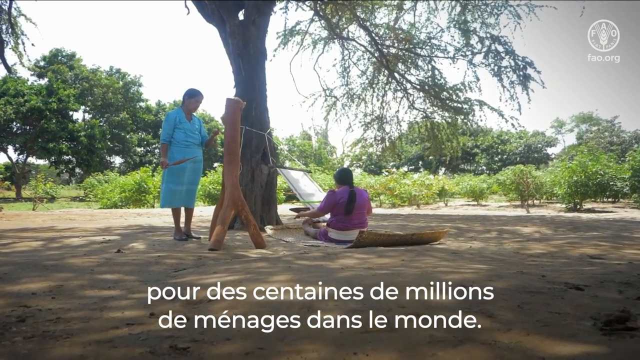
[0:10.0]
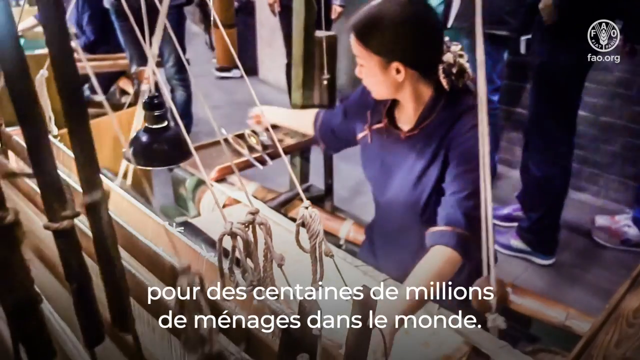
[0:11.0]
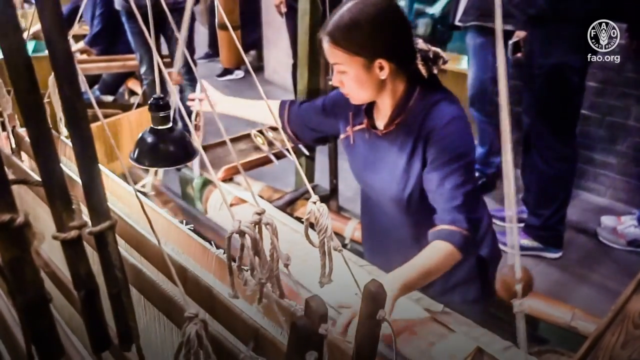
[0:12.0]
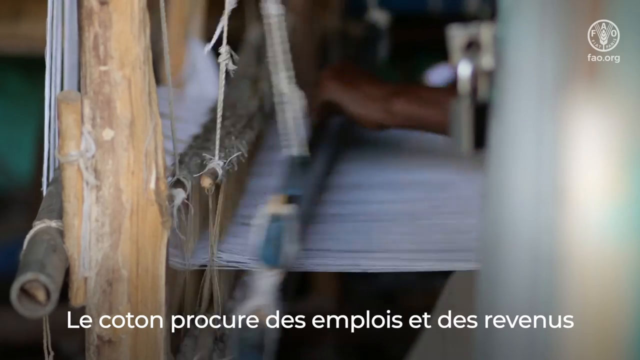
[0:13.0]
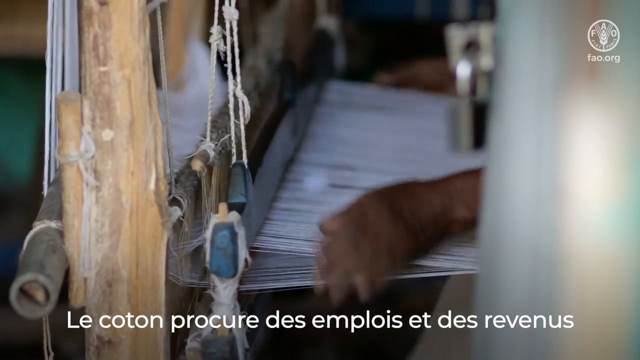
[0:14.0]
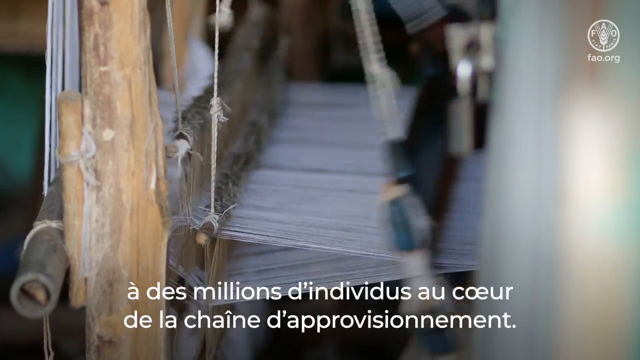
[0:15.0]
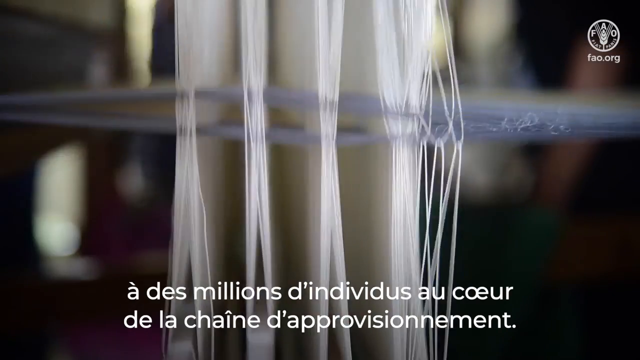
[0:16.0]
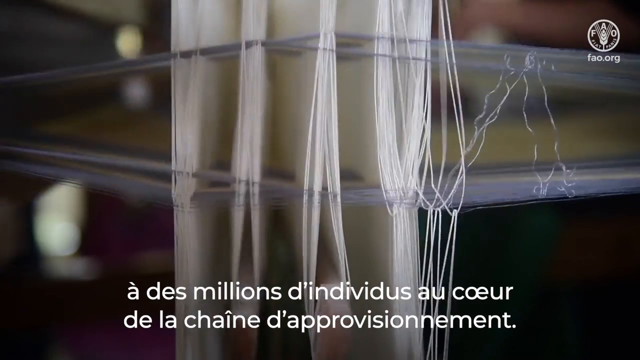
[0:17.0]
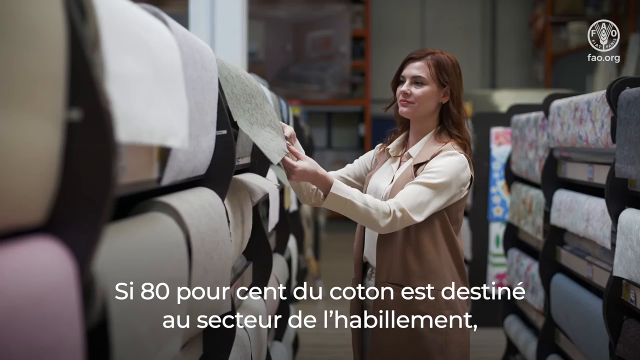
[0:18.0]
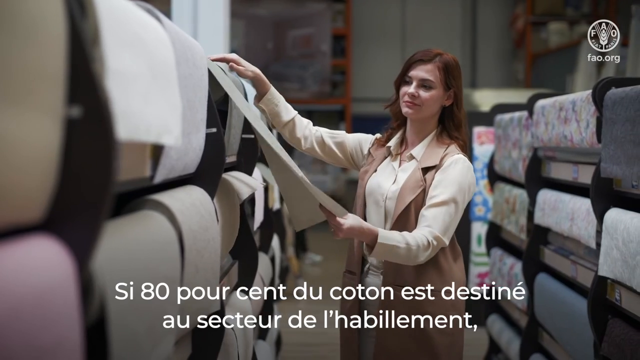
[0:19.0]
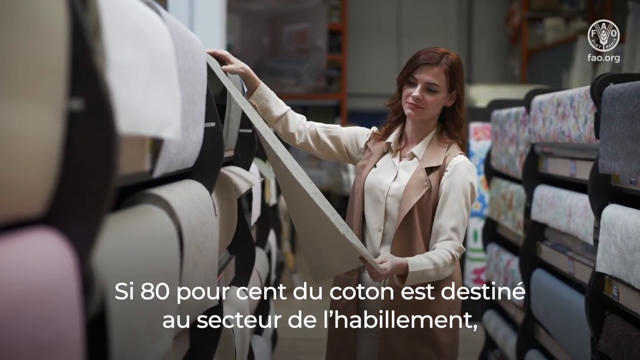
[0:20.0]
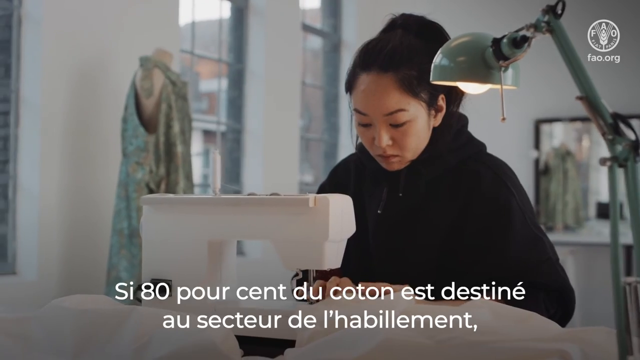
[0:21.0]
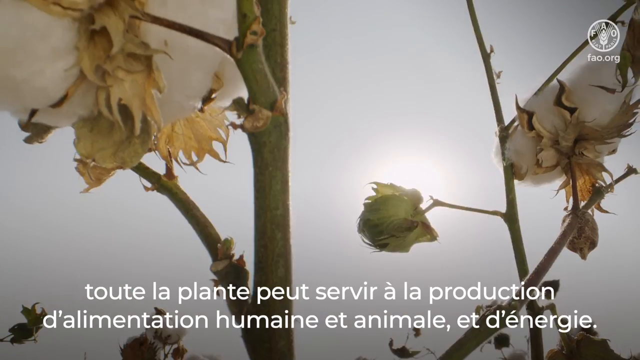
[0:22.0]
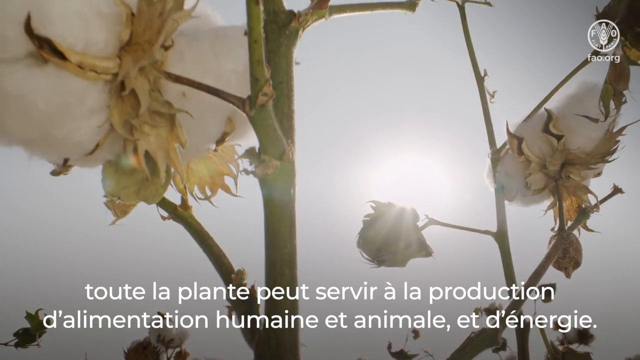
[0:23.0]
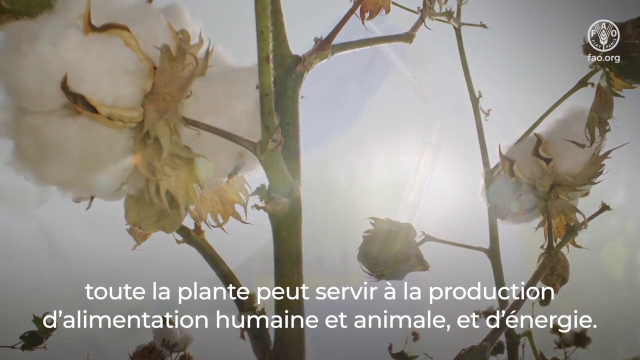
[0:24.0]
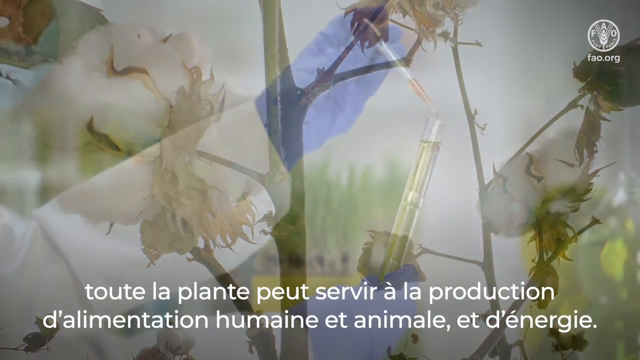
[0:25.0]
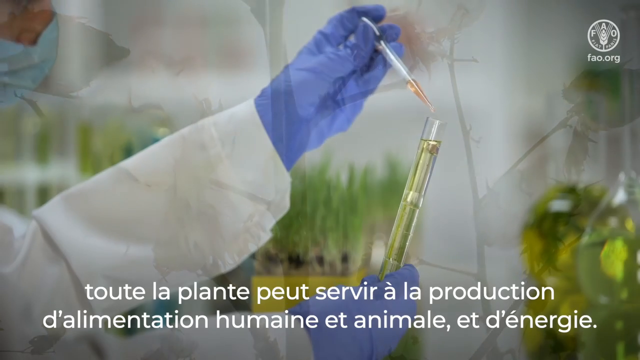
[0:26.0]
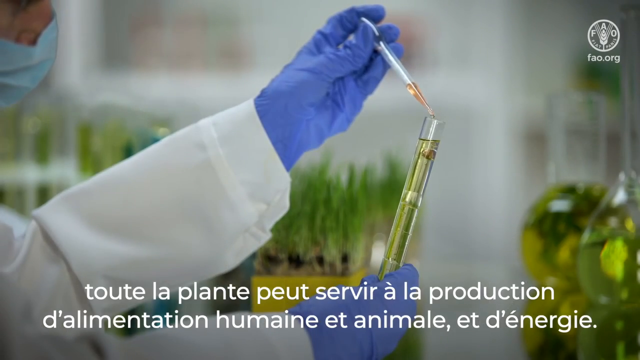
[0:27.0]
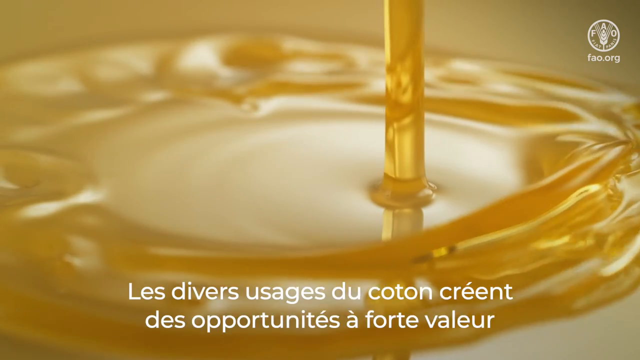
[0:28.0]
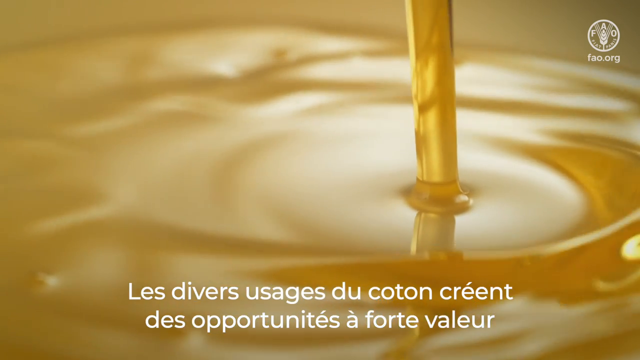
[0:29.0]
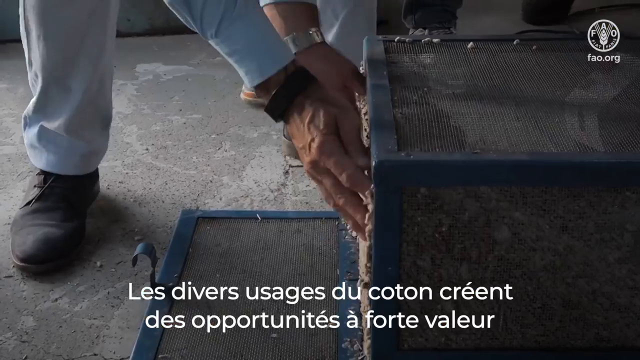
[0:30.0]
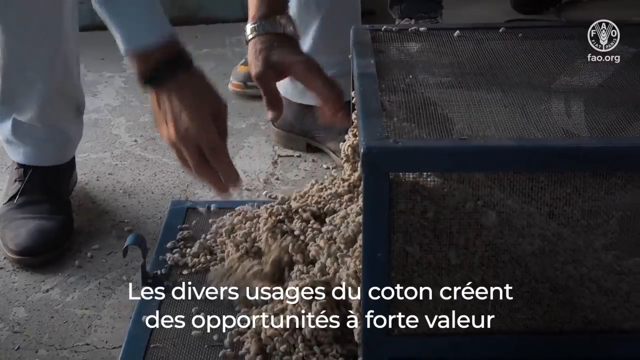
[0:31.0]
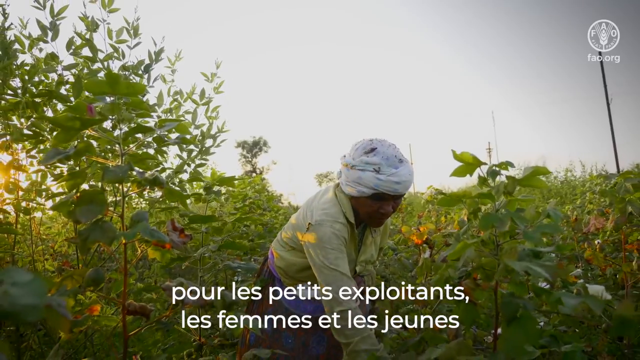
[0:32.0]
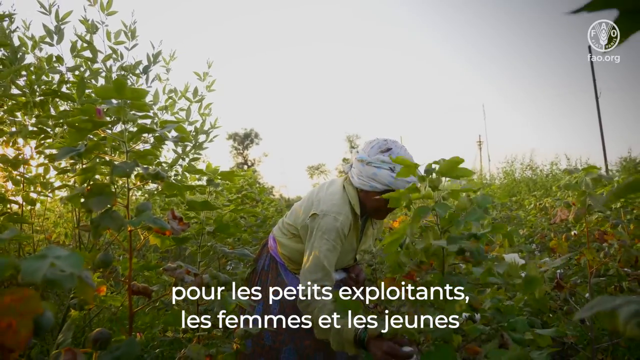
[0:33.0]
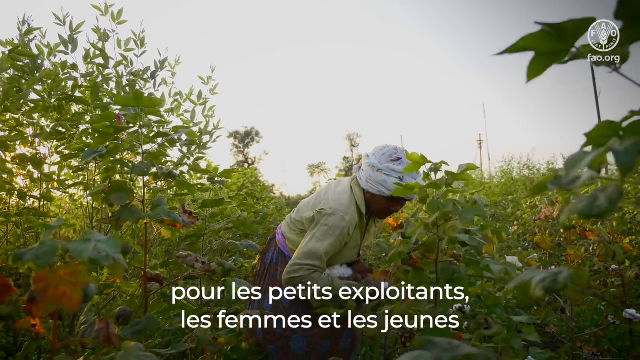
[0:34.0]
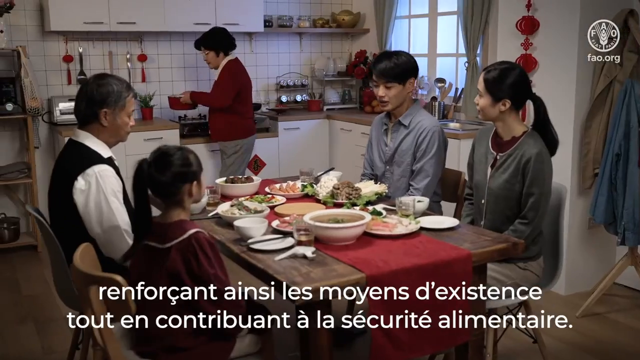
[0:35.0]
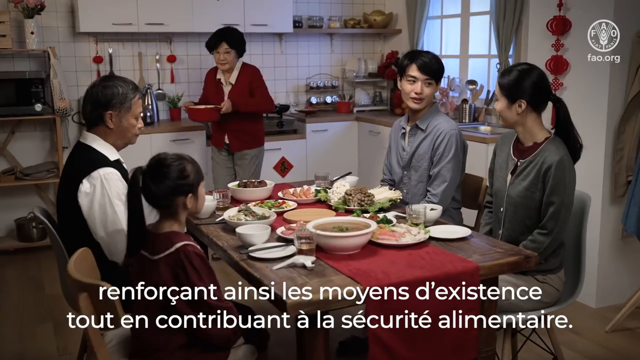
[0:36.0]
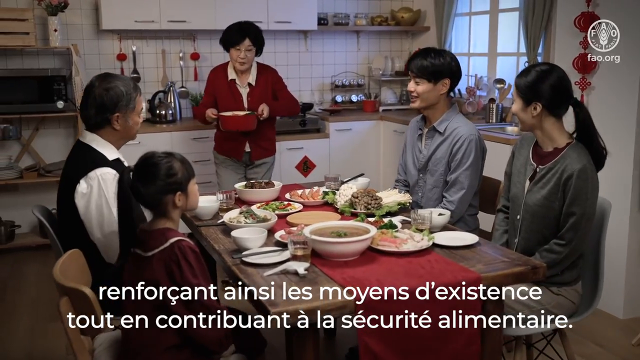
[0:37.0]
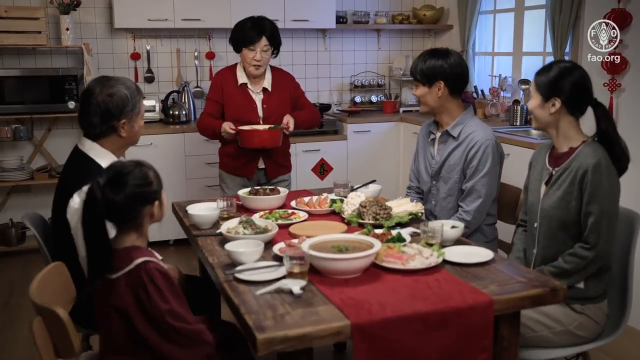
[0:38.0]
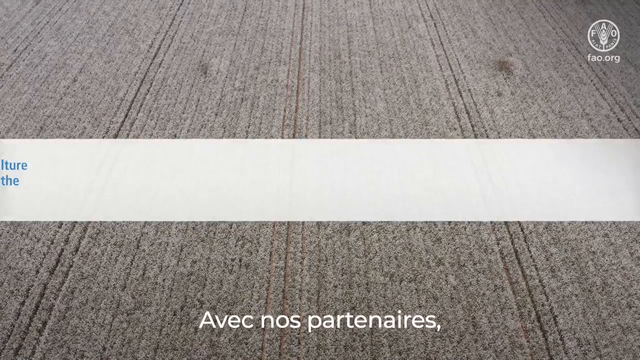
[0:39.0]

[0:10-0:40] A woman in Asian-style clothing, a blue dress with mid-length sleeves, sits in front of a wooden machine that seems to be used to push strands of cotton to make textile or cloth. Multiple people stand behind her. The camera pans into a close-up of what is happening inside the machine, where many different strands of cotton are pulled back and forth by the frame. The view switches, and this time the strands run perpendicular to the screen and are much thinner. The next scene shows a Caucasian woman with red hair wearing a long cream-colored collared shirt with a brown vest, looking at a piece of cloth being rolled out. Another scene shows a woman in a black turtleneck sweater in front of a sewing machine, with a teal-colored lamp in the foreground. The video switches back to the cotton plant, then pans toward someone's arms in a laboratory coat, wearing blue plastic gloves, dipping some yellow oil into a vial. There are also scenes of a family sitting in front of a table with many different Asian dishes; there seem to be a mom, dad, daughter, and grandparents, and the grandma holds a red pot as she approaches the table.